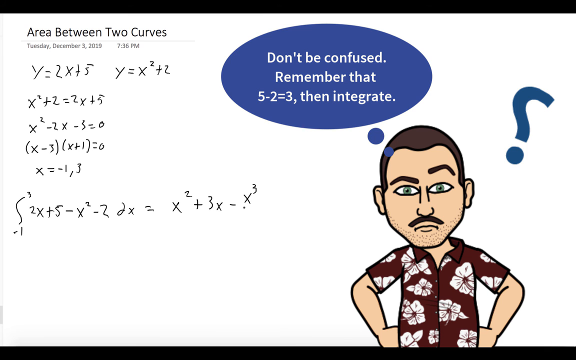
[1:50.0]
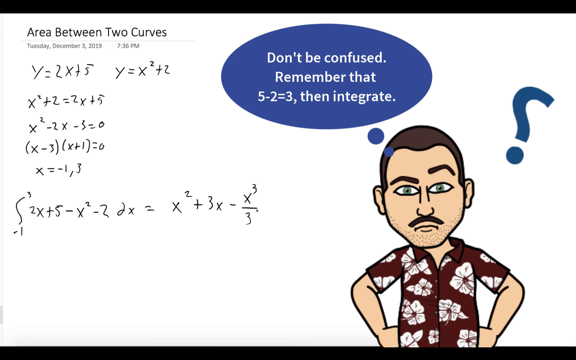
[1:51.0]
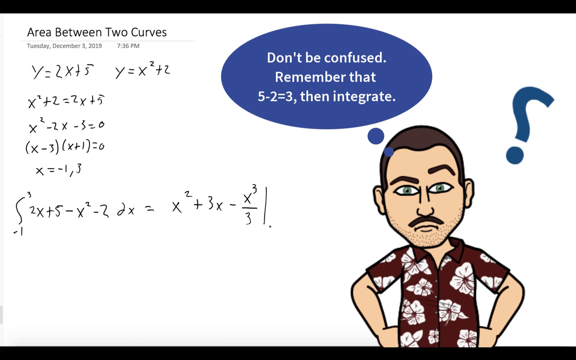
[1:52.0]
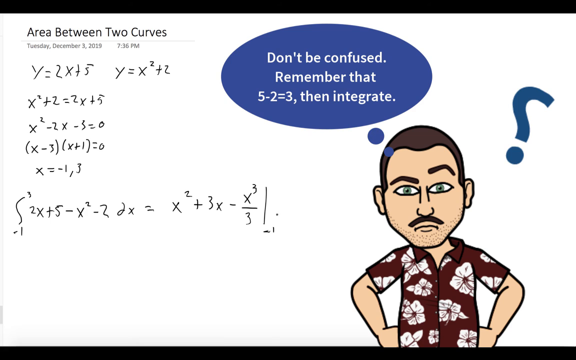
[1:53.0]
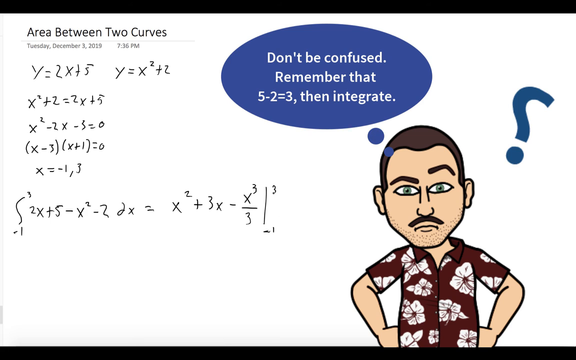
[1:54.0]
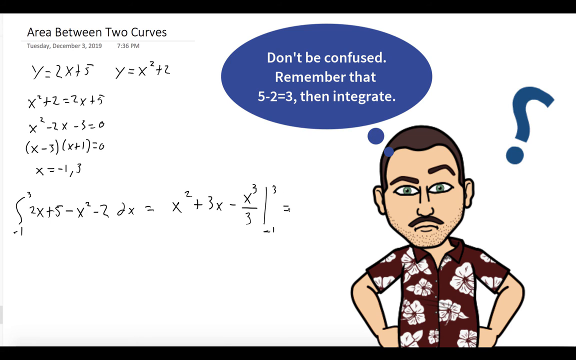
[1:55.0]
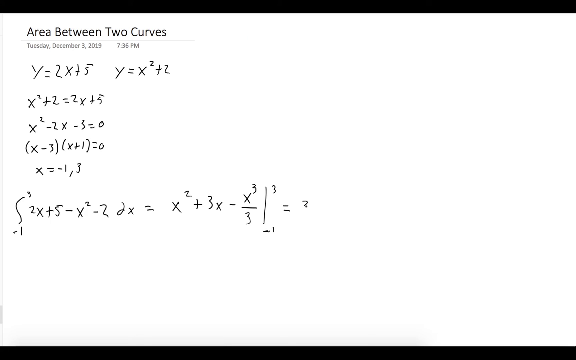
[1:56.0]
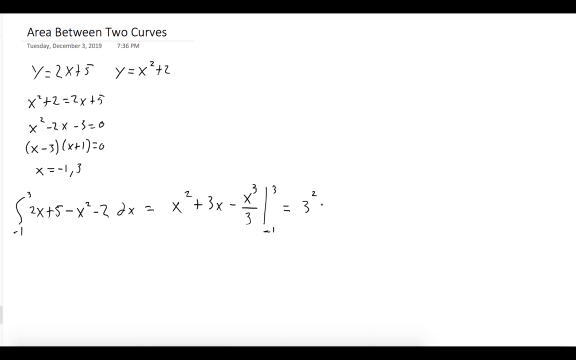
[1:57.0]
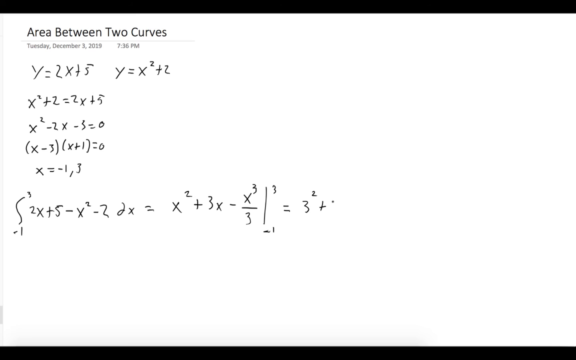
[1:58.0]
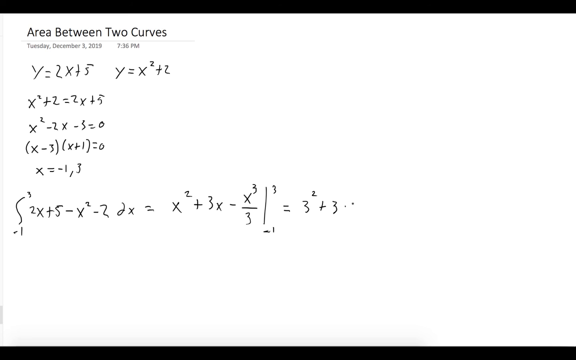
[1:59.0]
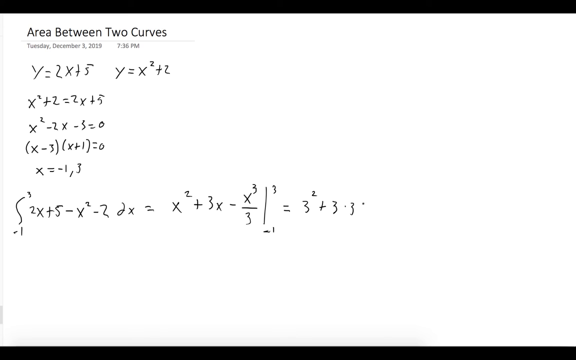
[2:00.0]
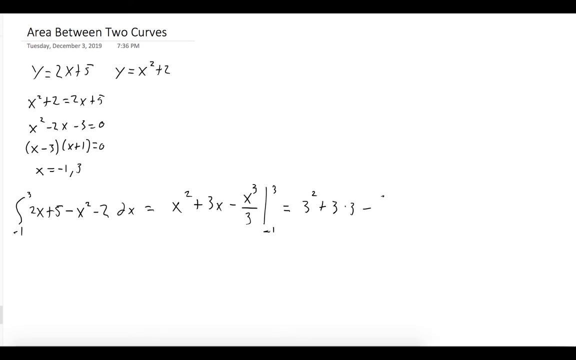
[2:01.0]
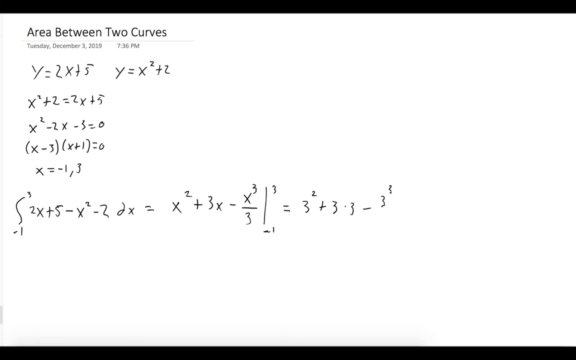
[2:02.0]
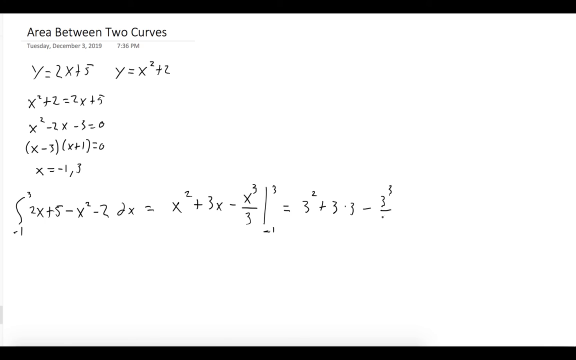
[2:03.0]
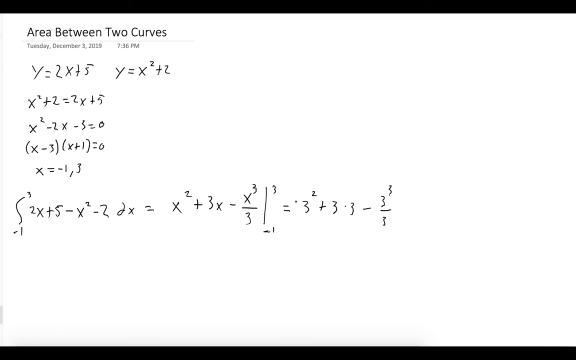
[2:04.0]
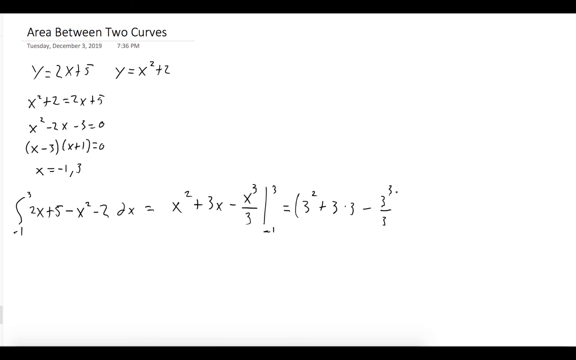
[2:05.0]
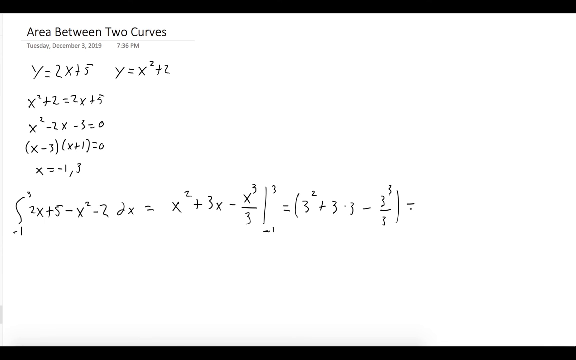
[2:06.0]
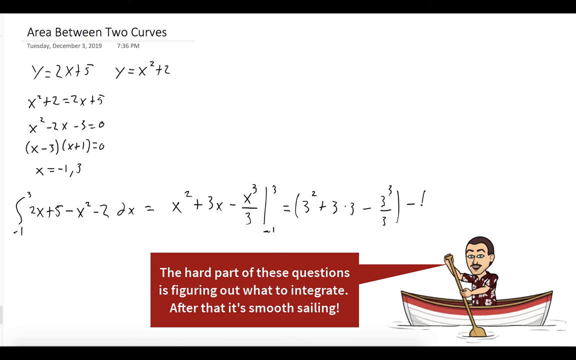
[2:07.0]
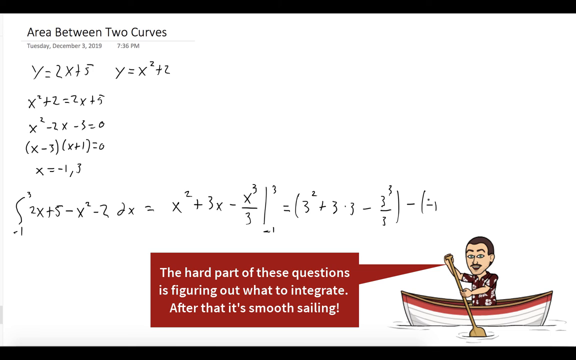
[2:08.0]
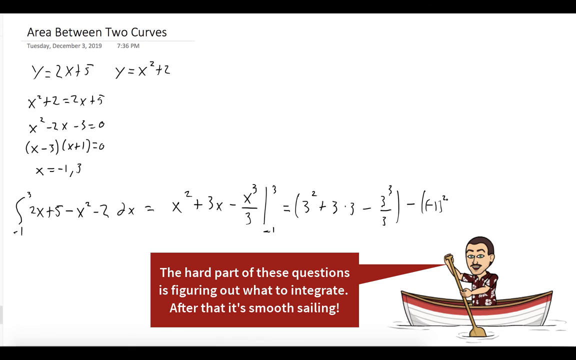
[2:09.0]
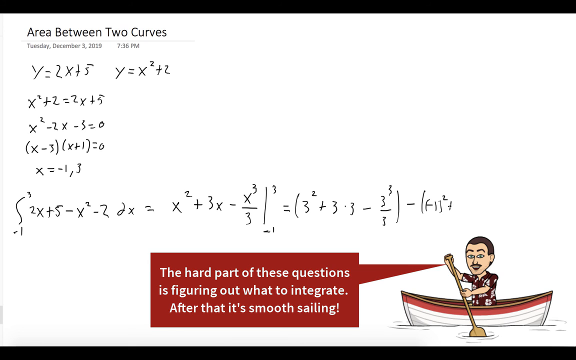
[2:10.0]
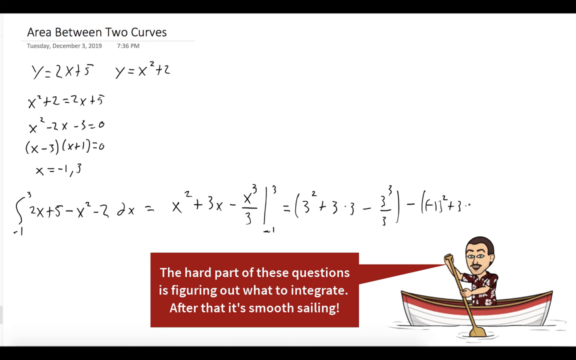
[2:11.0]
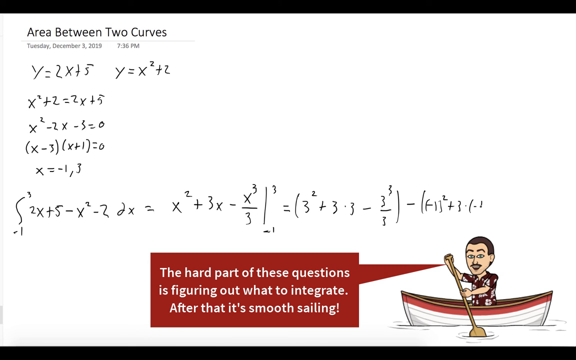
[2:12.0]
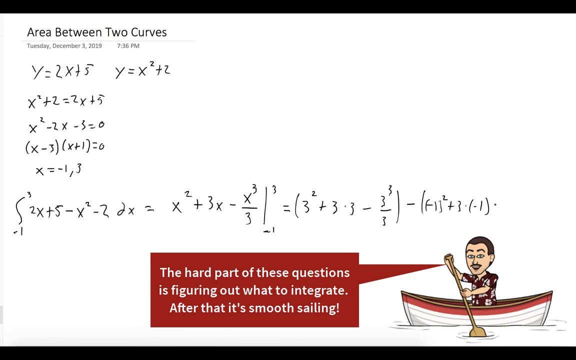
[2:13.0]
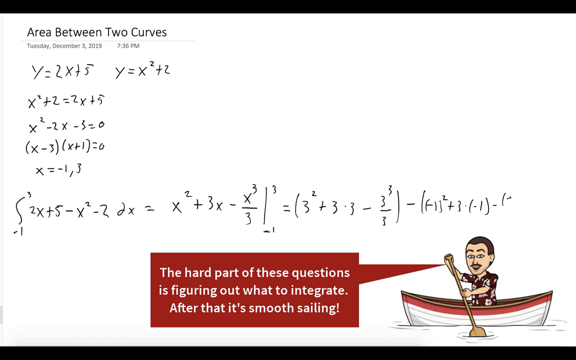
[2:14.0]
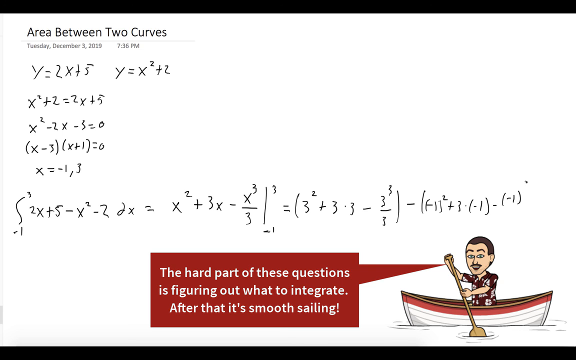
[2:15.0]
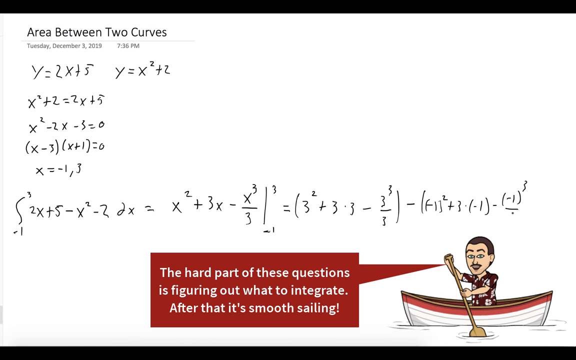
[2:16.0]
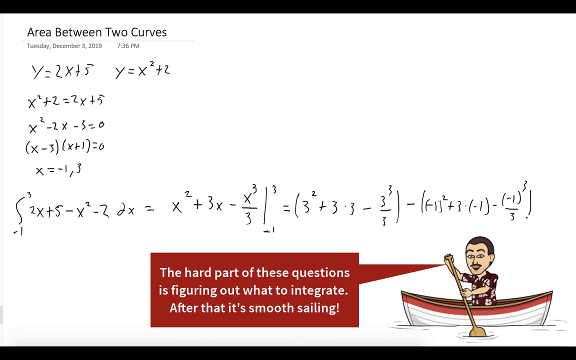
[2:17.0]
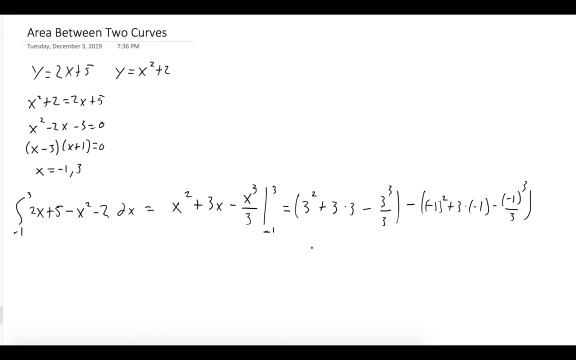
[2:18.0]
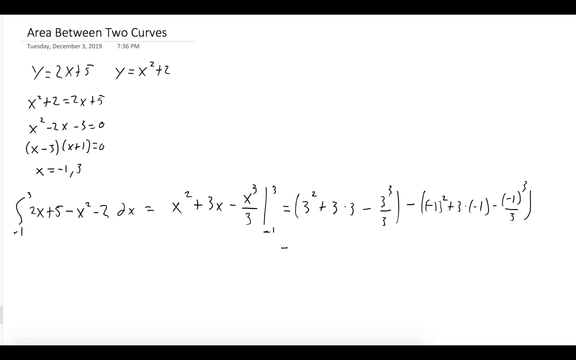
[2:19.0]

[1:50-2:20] The equation continues with an integrated expression containing fractions, terms with 3 squared, 3 times 3 and 3 cubed, and terms in parentheses with negative 1. The work is written out very clearly with a lot of space. Another avatar appears, in a boat, saying "part of these questions is figuring out what to integrate after that it's smooth sailing." The avatars are placed in different corners of the screen.